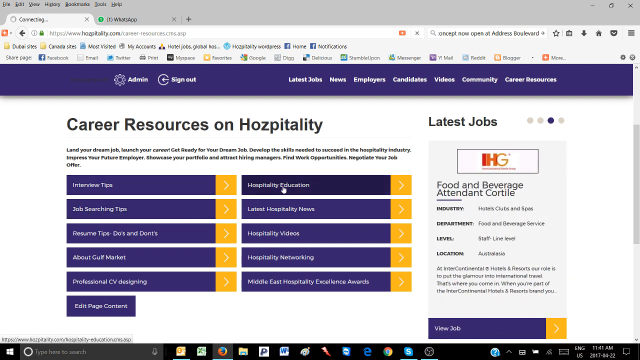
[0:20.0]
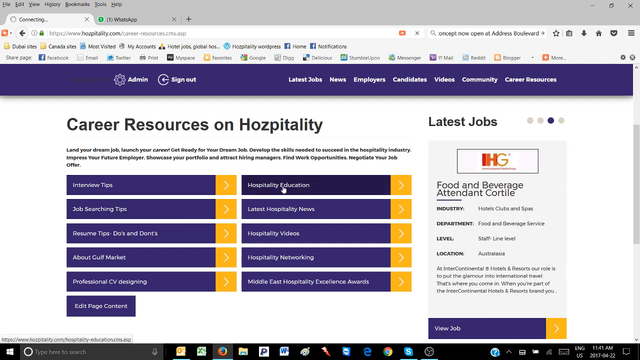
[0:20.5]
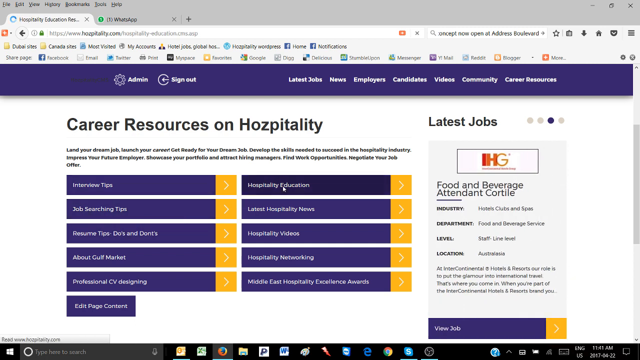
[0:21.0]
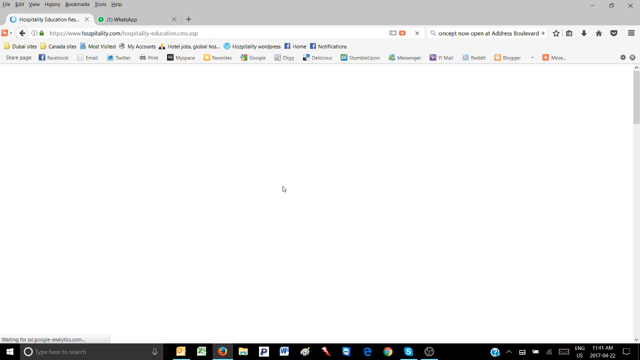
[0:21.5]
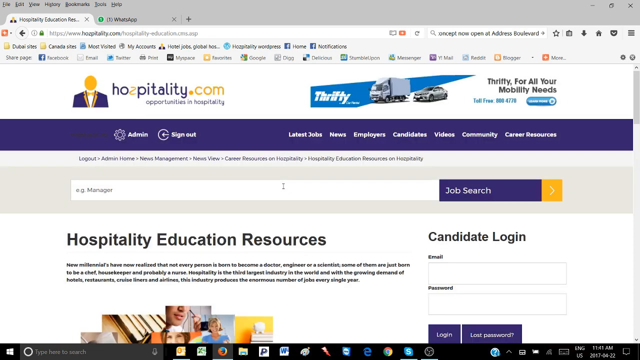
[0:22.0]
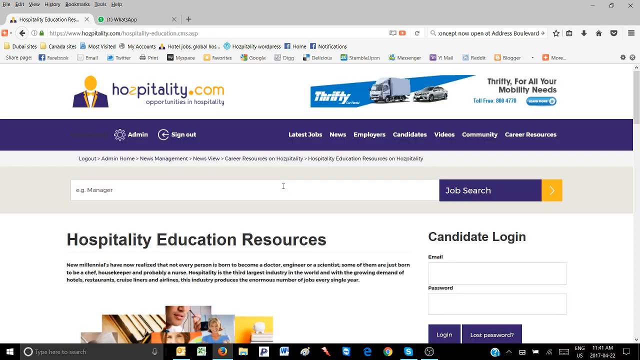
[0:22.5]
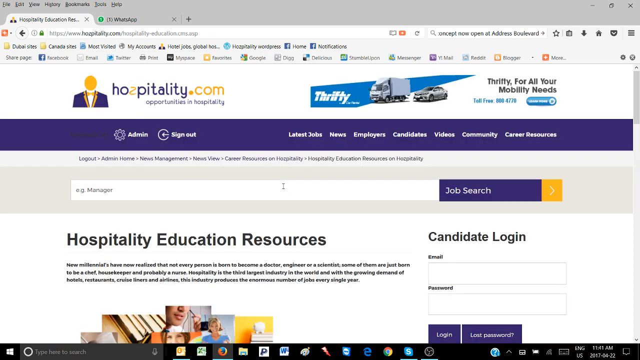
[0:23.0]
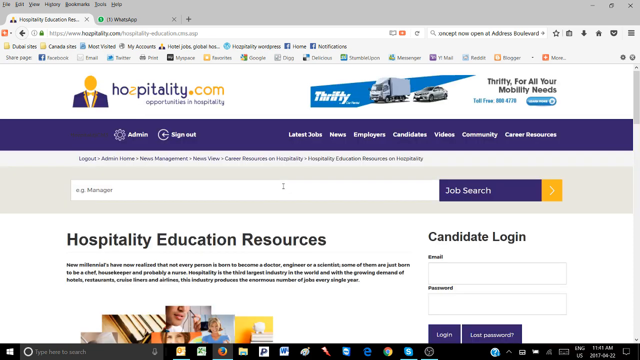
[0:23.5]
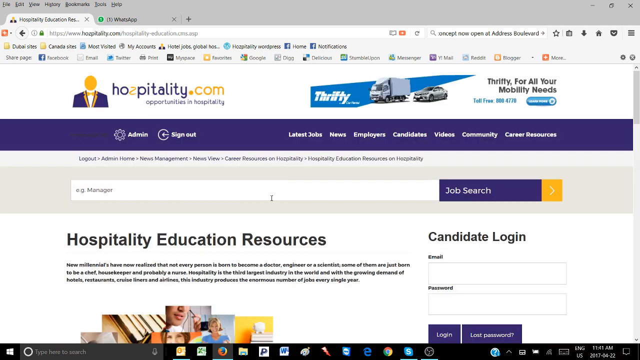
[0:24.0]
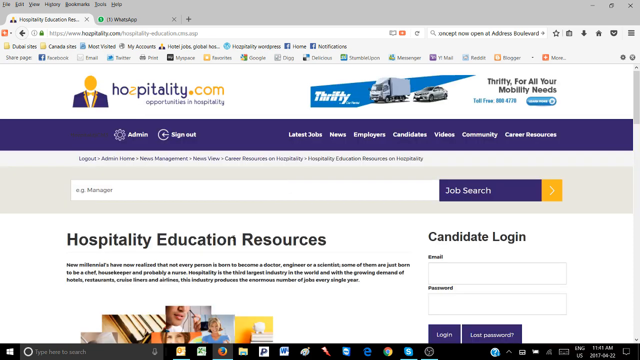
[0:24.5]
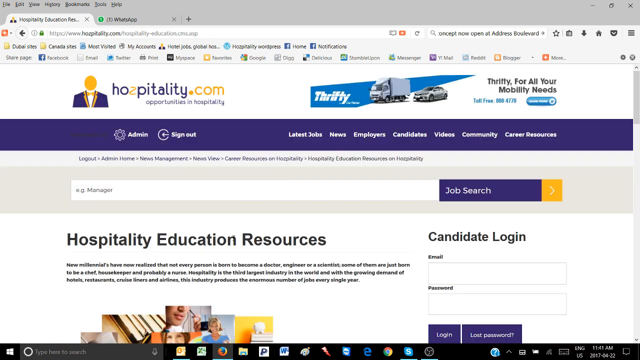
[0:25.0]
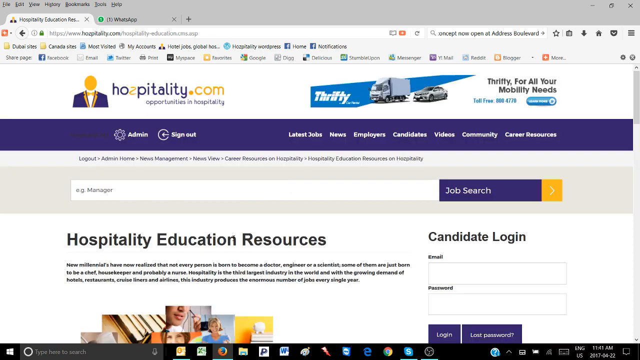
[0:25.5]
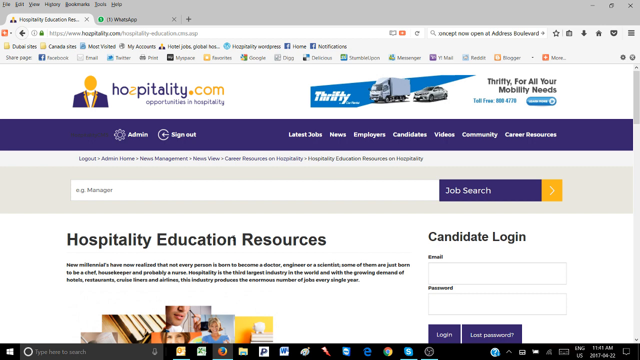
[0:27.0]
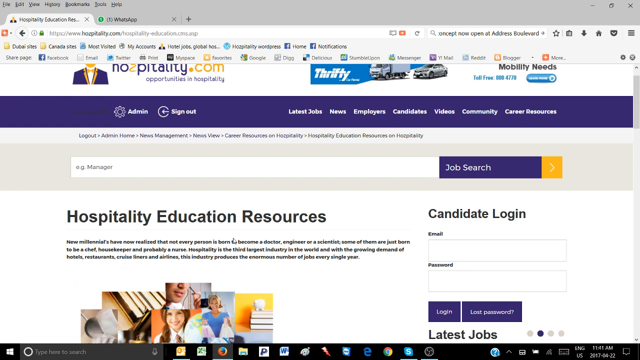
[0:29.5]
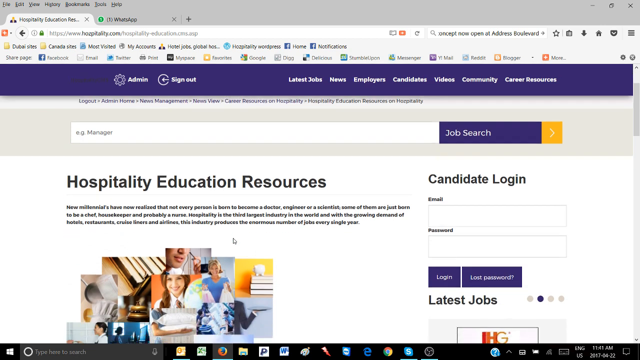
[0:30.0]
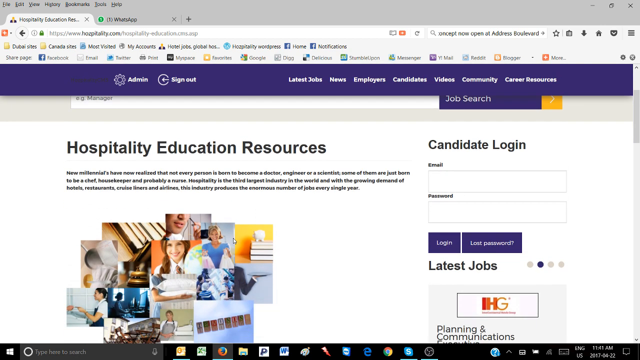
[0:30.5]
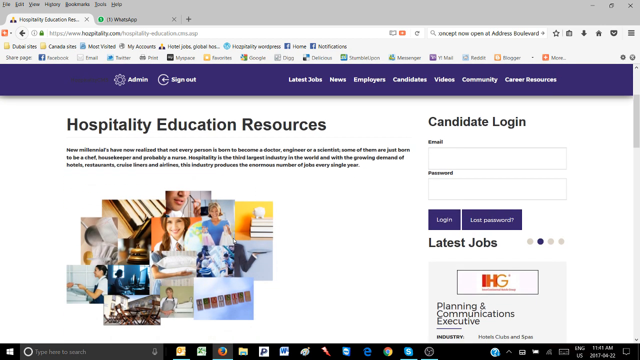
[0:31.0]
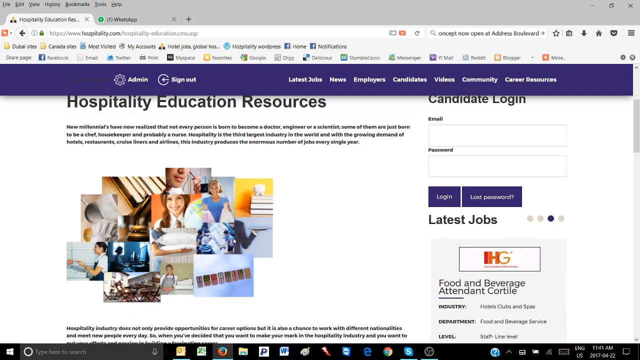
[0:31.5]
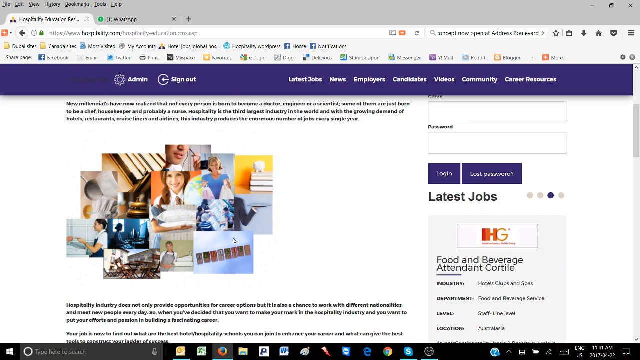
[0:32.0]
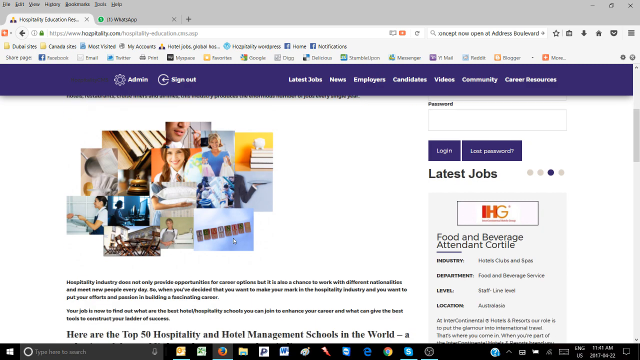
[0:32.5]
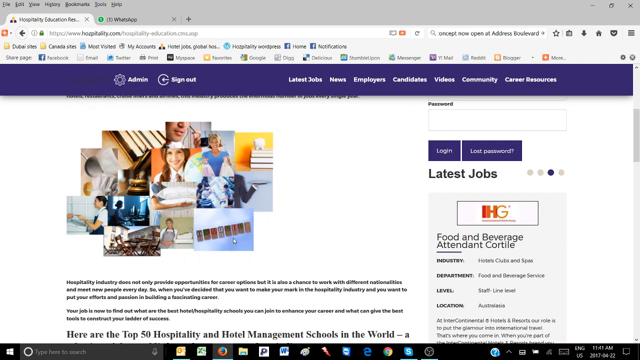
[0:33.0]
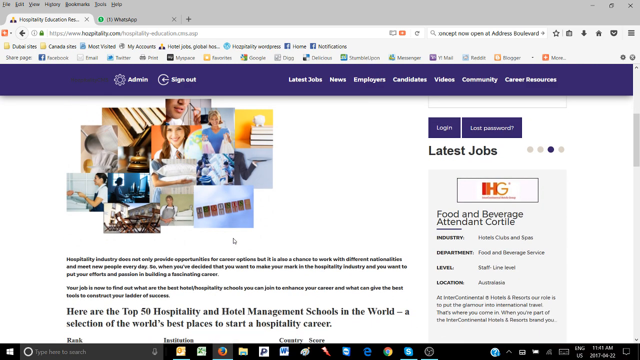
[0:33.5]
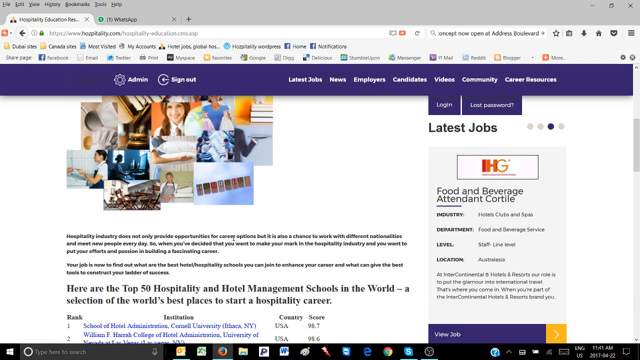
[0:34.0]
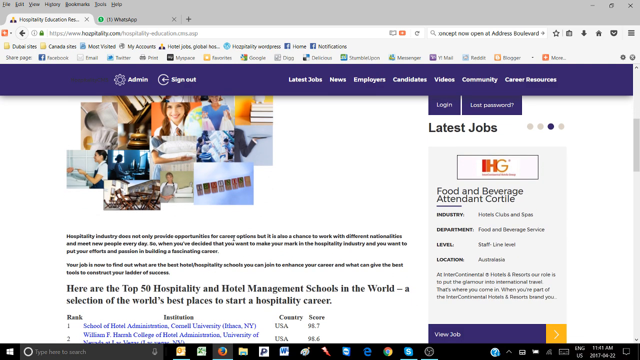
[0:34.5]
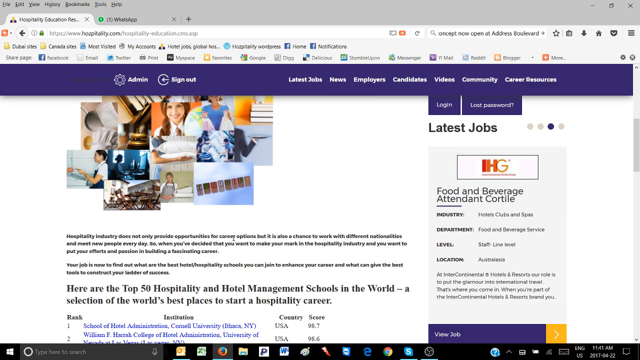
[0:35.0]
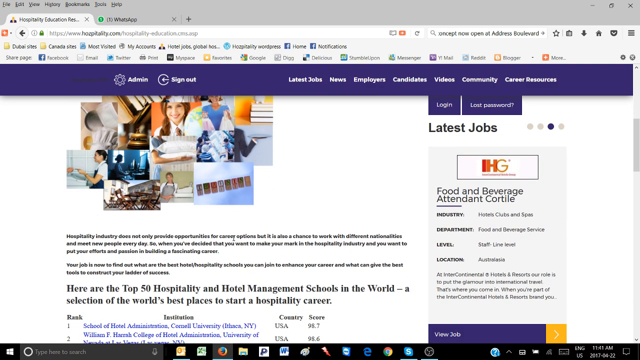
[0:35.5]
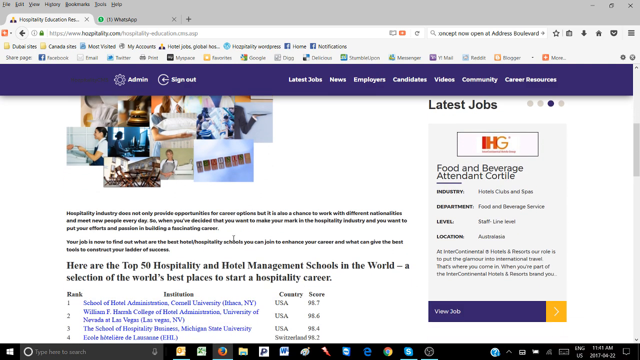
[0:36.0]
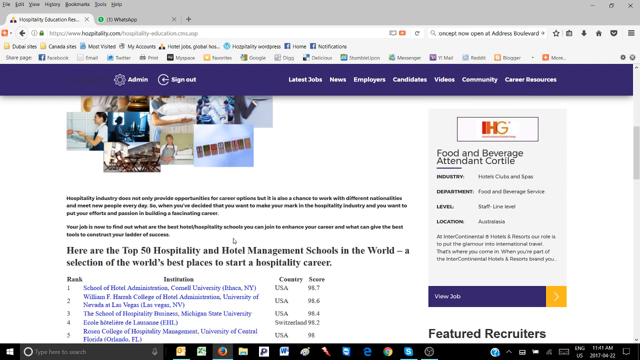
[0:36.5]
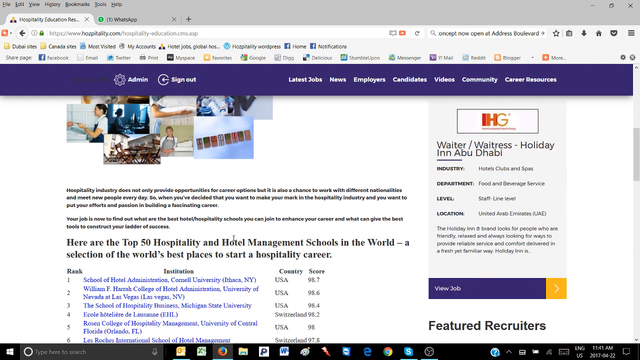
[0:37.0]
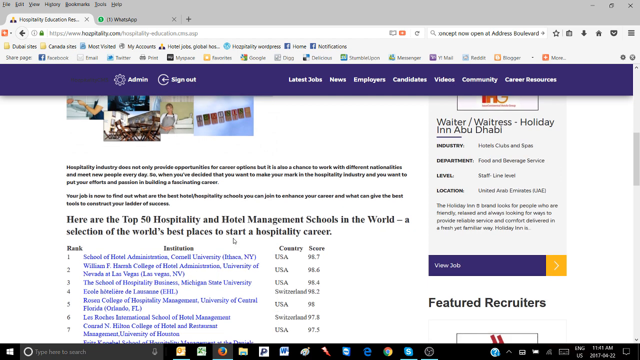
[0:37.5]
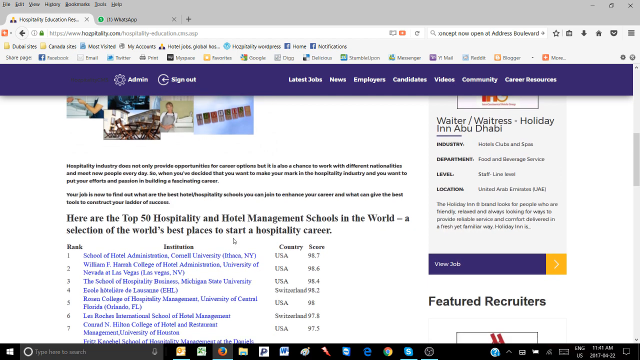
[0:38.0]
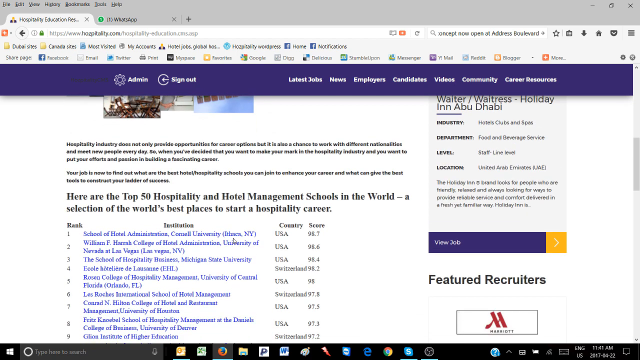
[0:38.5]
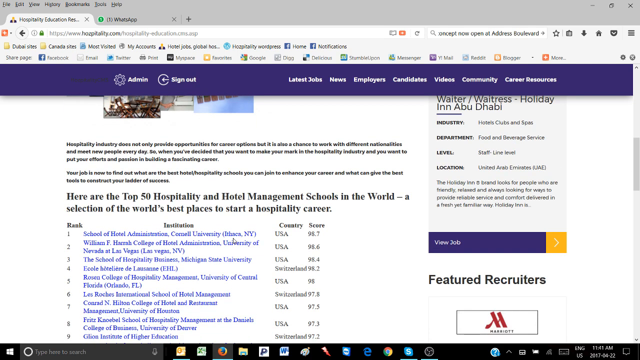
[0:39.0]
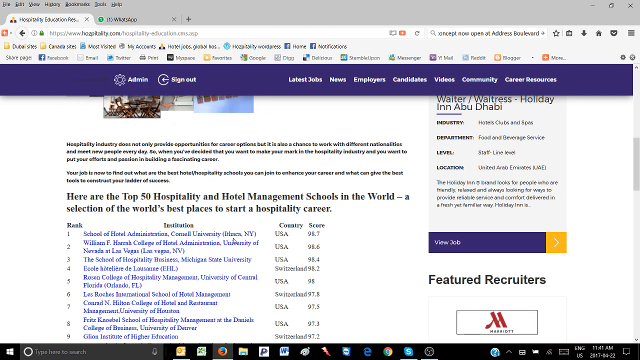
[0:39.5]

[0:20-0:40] The career page of the hospitality education resource is shown, with the cursor moving up and down and a search engine visible. The screen scrolls from top to bottom, revealing a section on the left, about two inches from the top, an inch in from the left side and three inches from the bottom. It contains multiple tiny pictures put together of different young women and young boys looking at the camera, with wording underneath about the top 50 hospitality jobs. The layout at the very top shows this is on a computer screen, with the pages that lead to other sections or websites and an area that says "hospitality education". There are many clickable icons. The screen rolls from the bottom to the top, and multiple areas on the left side are blue hyperlinks.